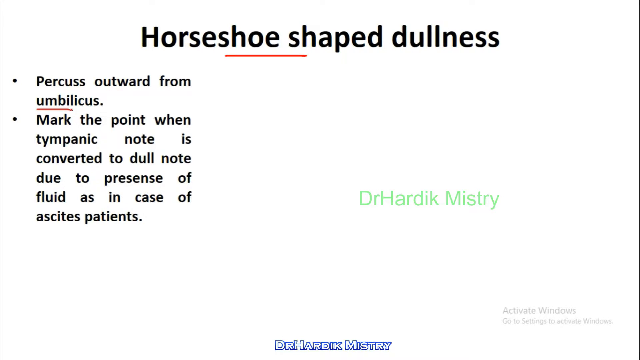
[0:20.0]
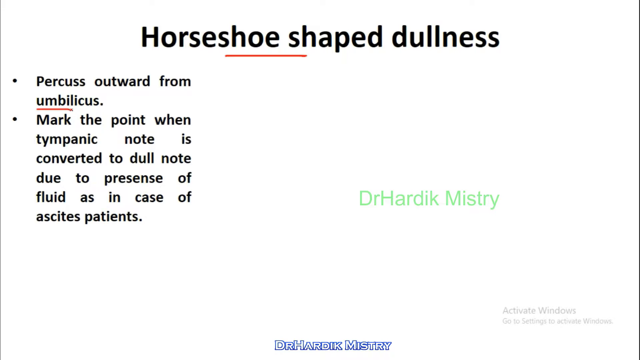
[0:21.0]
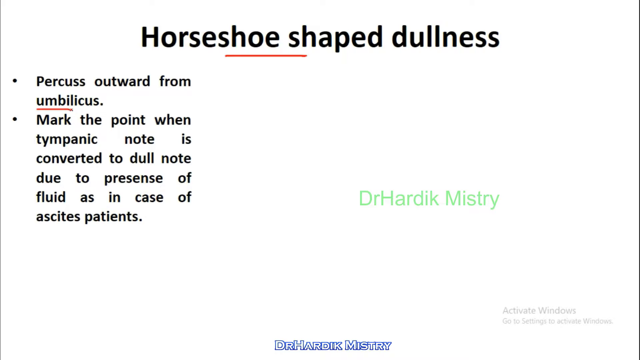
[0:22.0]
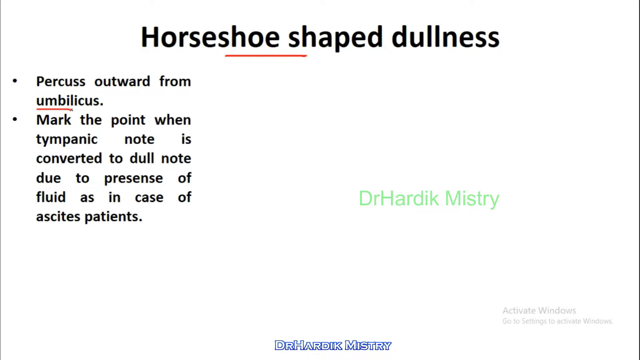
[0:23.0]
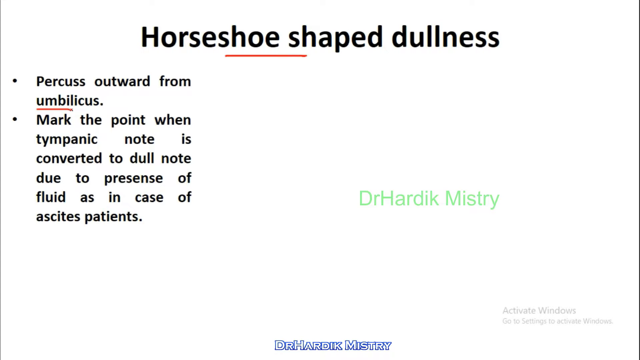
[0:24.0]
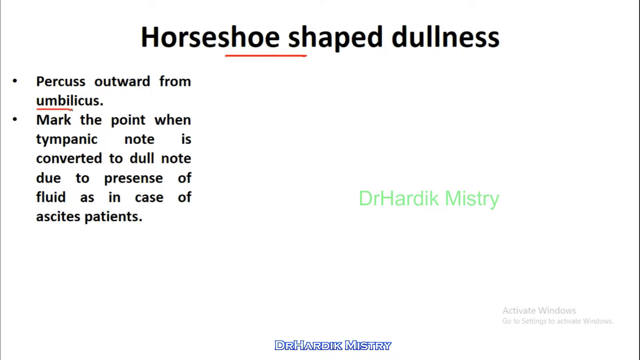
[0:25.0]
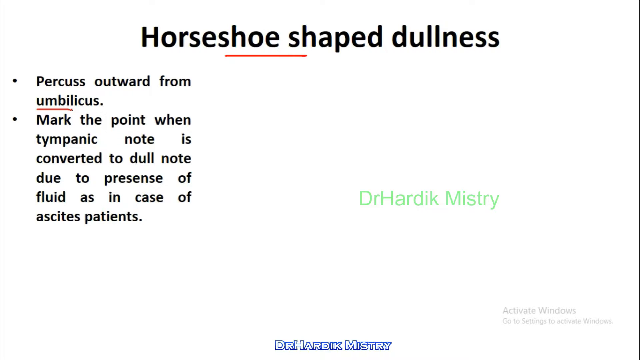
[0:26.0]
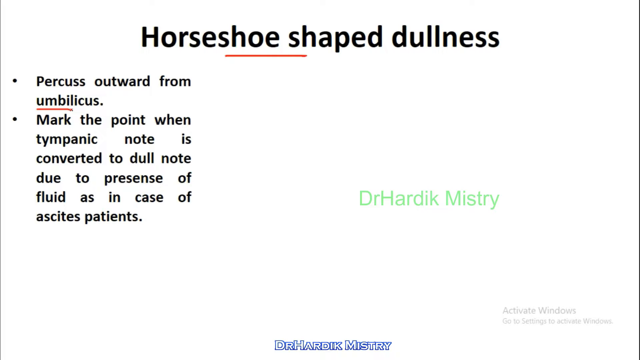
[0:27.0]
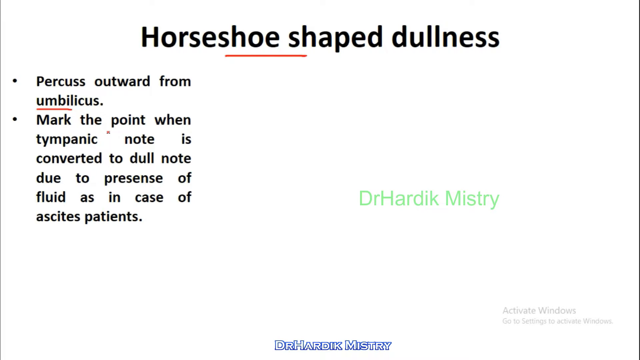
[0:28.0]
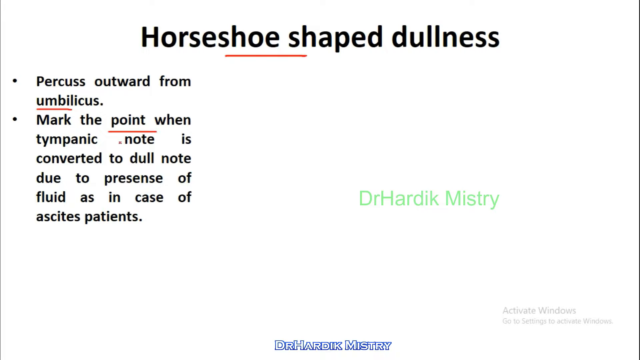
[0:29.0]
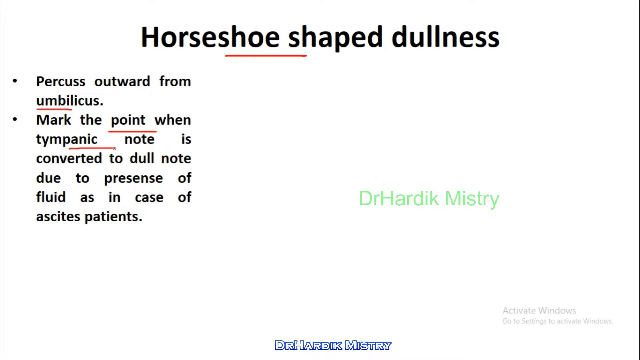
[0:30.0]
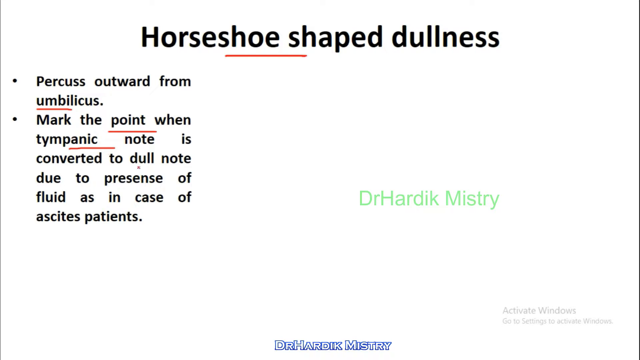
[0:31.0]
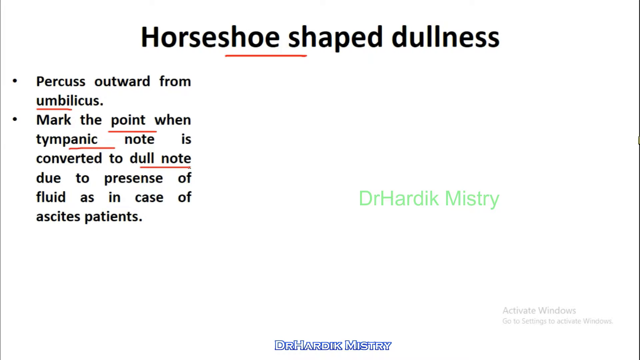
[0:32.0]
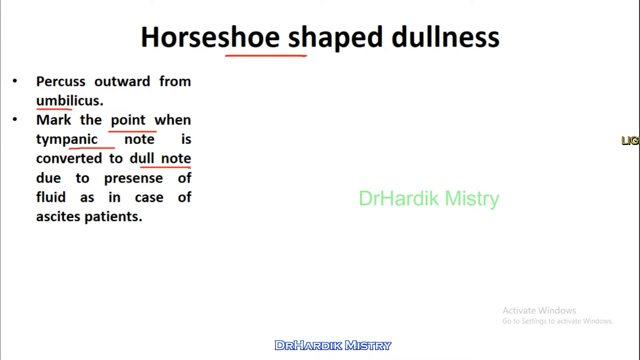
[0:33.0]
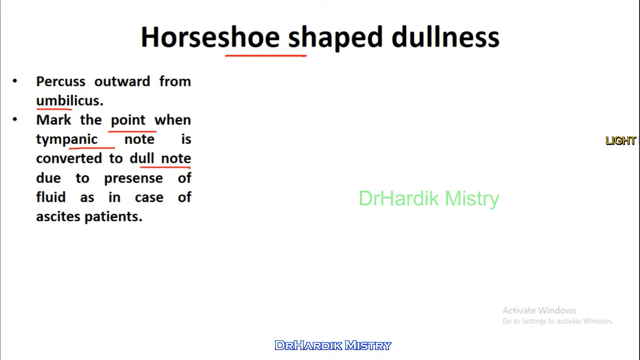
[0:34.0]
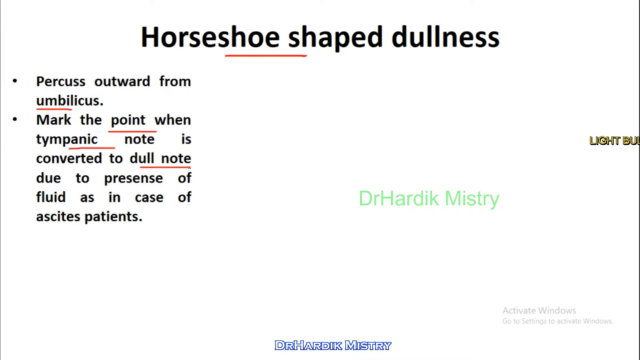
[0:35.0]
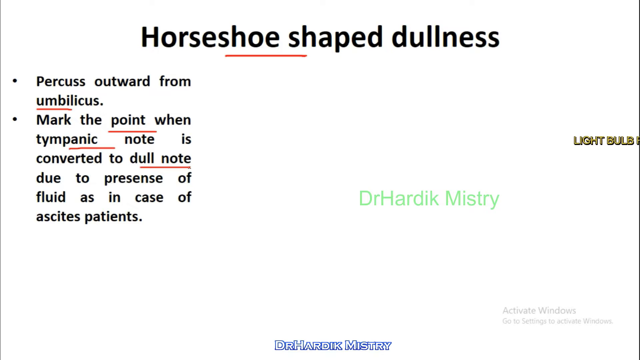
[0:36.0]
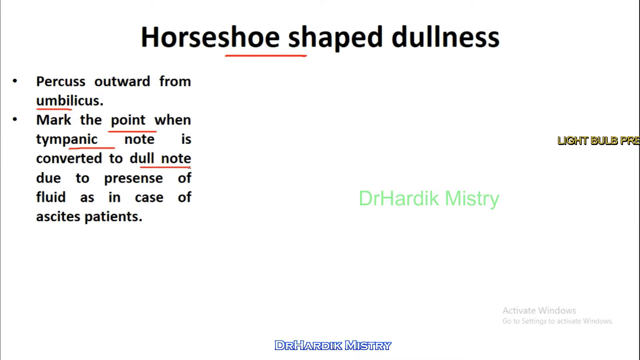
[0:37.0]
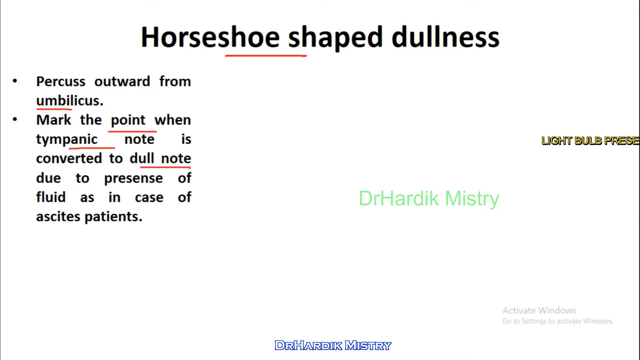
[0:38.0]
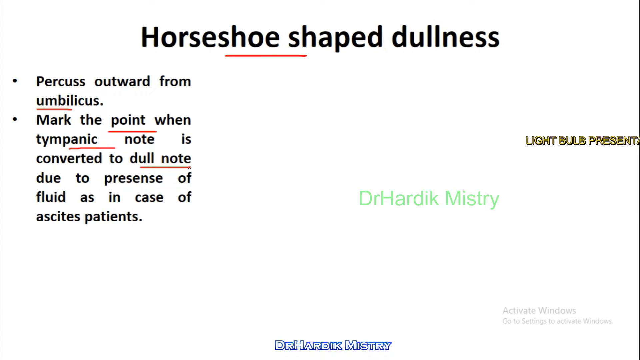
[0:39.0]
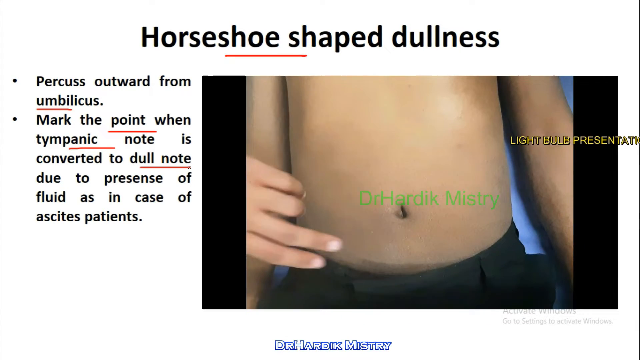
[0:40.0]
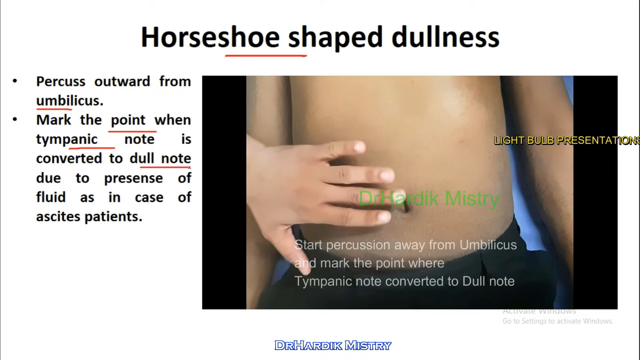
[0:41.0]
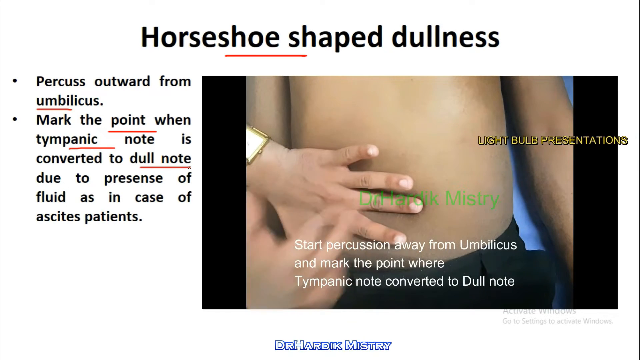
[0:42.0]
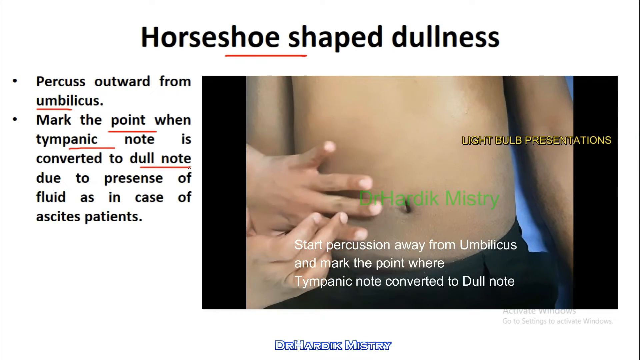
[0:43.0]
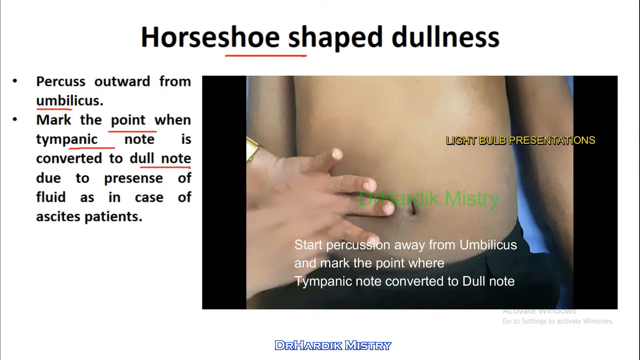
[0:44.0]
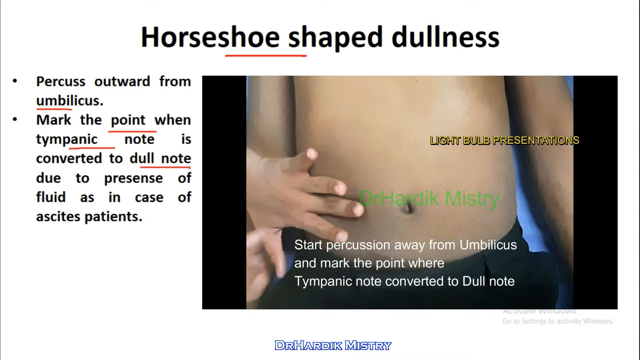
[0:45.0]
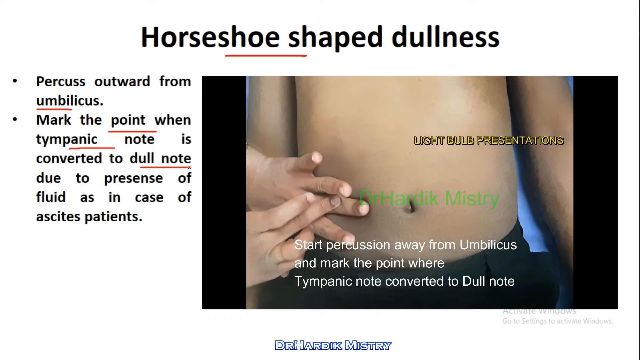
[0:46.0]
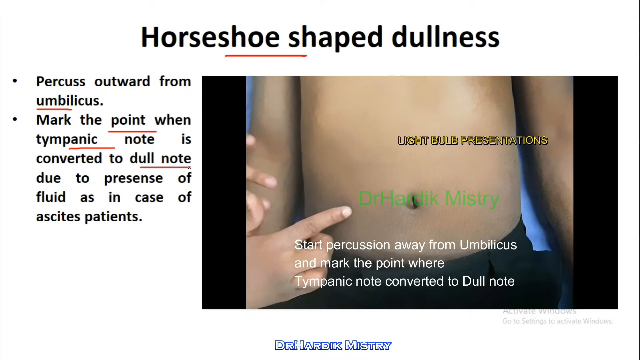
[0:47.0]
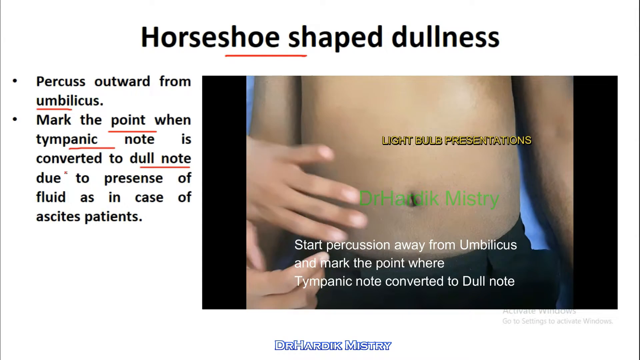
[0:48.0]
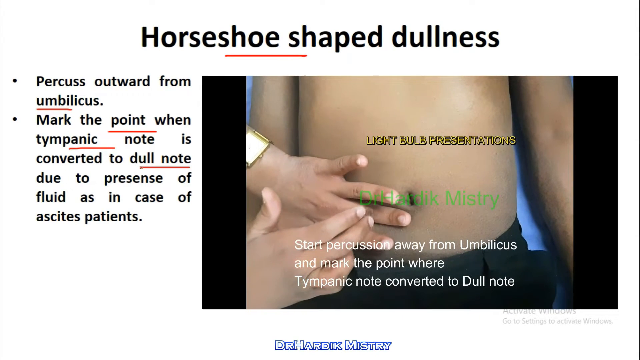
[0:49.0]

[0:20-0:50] The screen has a white background shading to a gray and black ombre at the bottom. Across the top, black text reads "horseshoe shaped dullness." On the left-hand side are two bullet points: the first reads "percuss outward from umbilicus," and the second reads "mark the point when tympanic note is converted to dull note due to presence of fluid as in the case of ascites patients." On the right-hand side, halfway down the screen, green text reads "Dr. Hardik Mistry." At the bottom, blue-outlined white letters read "Dr. Hardik Mistry." In the bottom right corner it says "activate windows. Go to settings to activate windows." A scroll begins to crawl across from the right-hand side of the screen reading "light bulb presentations." The picture then changes, and an inset shows an image of a man's torso, seen from below the breast to just below his umbilicus, with his arms visible. A man holds the patient's stomach with his left hand and, with his right hand, taps his left hand, listening for sounds. He illustrates several taps and directions across the patient's stomach.